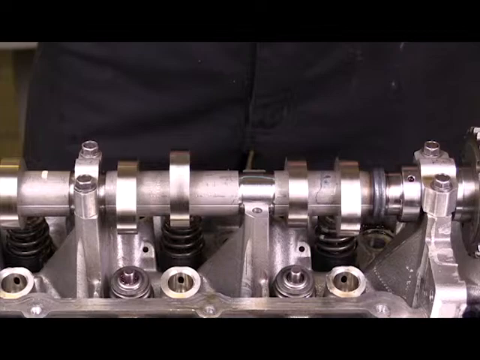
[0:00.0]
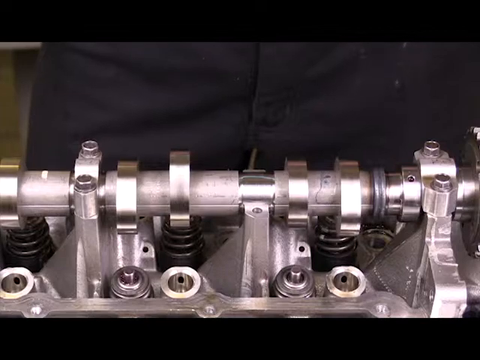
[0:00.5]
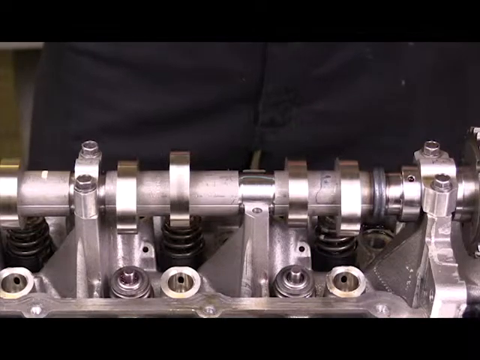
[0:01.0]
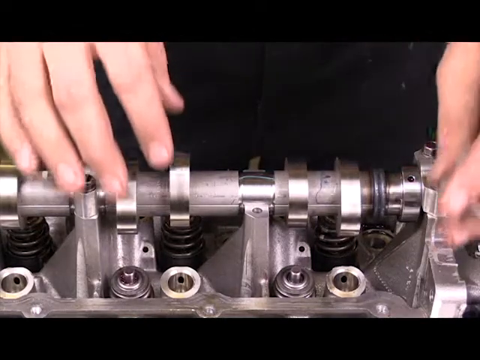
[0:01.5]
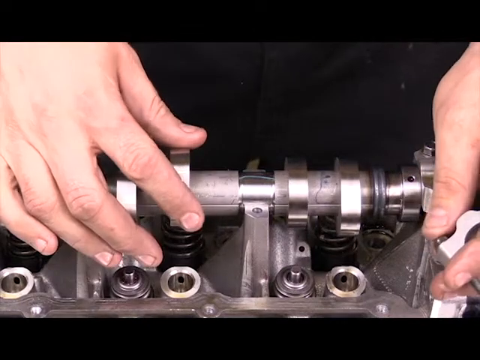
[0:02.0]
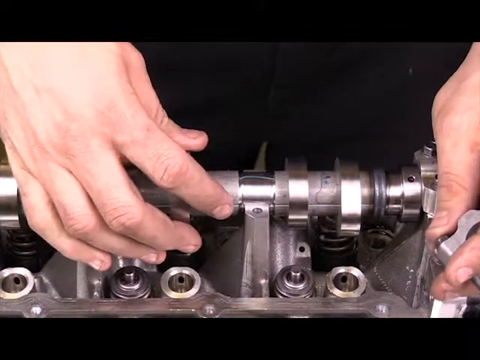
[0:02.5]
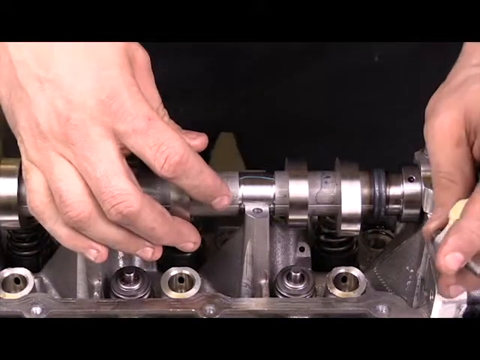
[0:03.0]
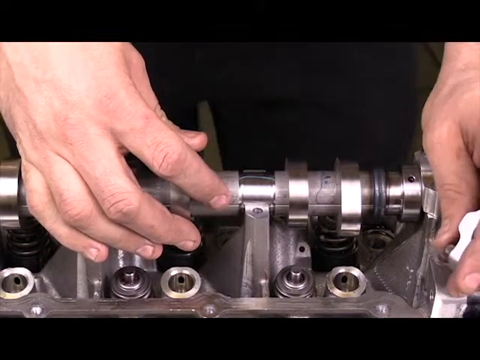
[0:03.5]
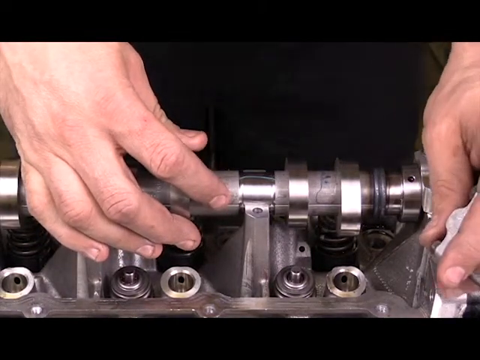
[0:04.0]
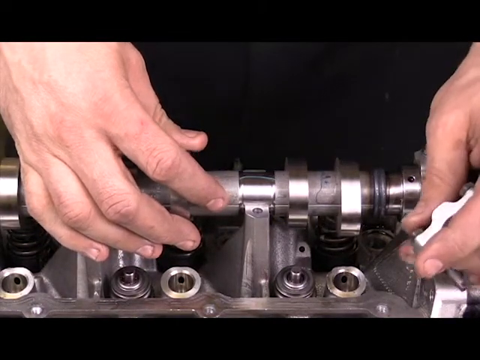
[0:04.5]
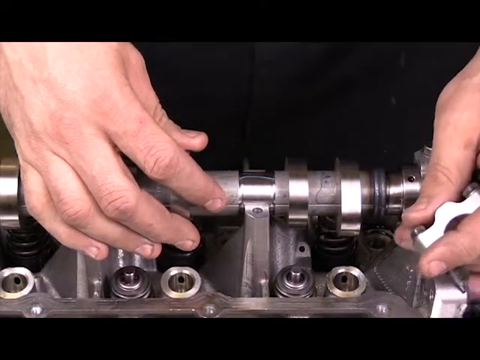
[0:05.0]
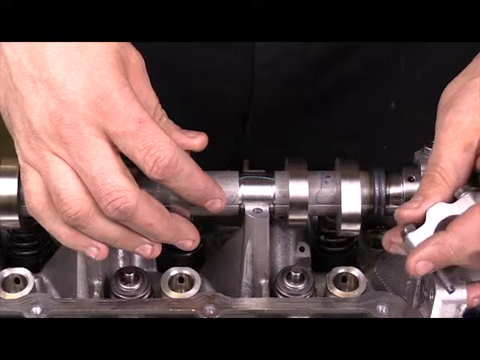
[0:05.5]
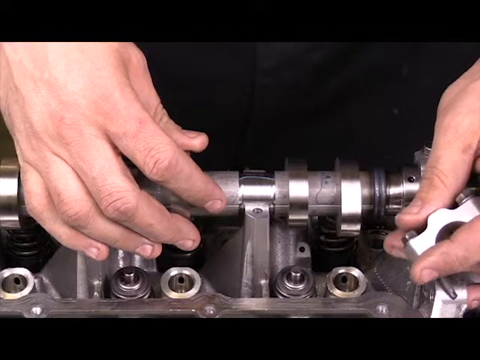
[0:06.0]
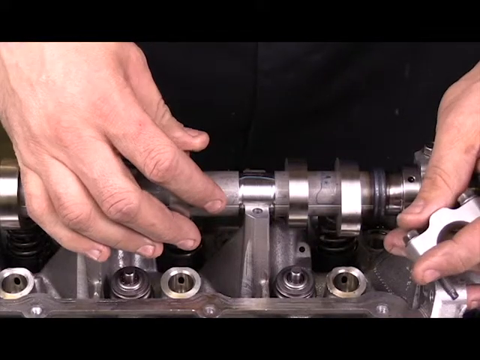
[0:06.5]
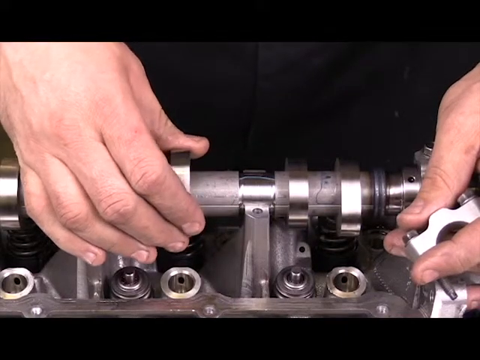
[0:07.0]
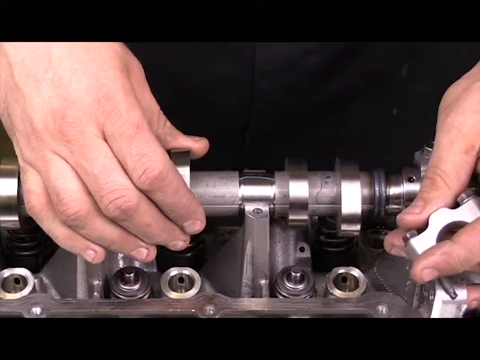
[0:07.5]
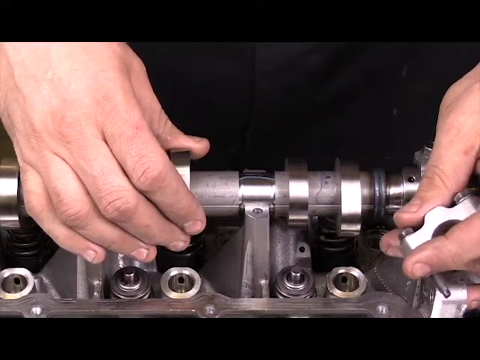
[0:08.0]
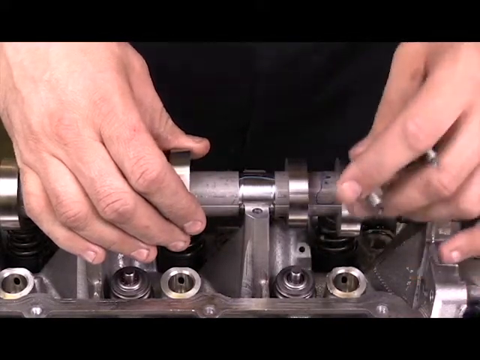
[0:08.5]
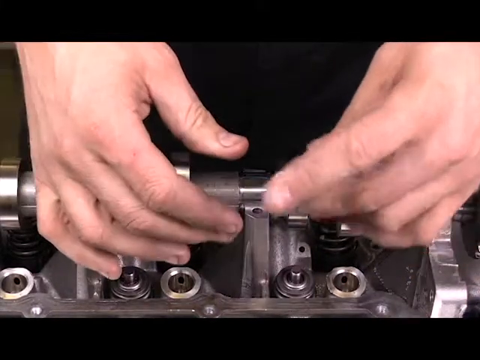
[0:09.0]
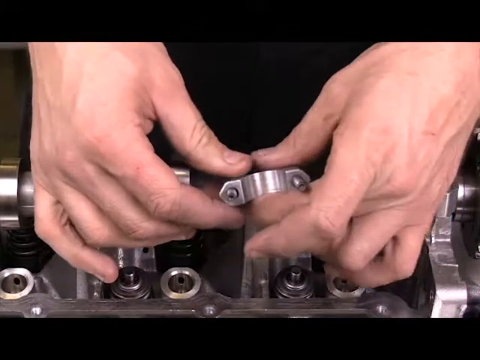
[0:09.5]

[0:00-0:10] A silver object that looks mechanical is shown, with what look like black springs on it. A pair of white male hands comes down into the frame and starts touching the object. The left hand holds a piece of metal between the thumb and forefinger and starts to kind of move it, revealing that it is a little loose piece of something. He then passes the piece from his left hand over to his other hand, and both hands grasp it.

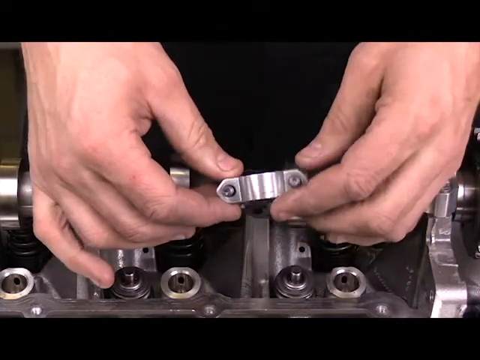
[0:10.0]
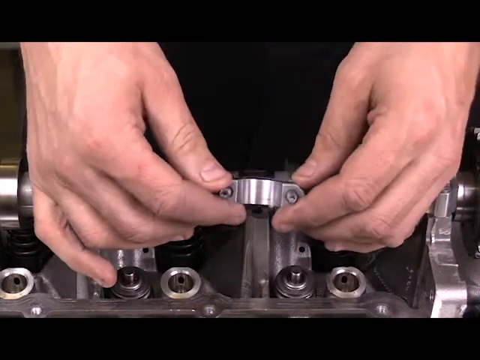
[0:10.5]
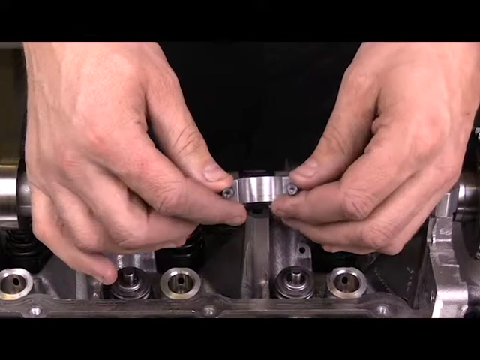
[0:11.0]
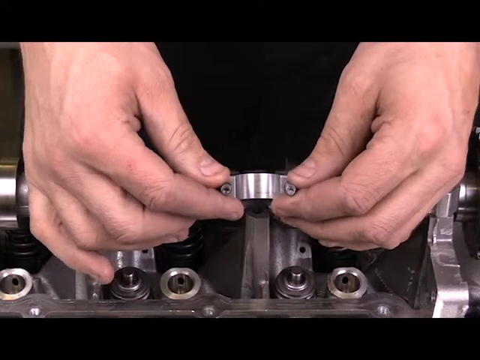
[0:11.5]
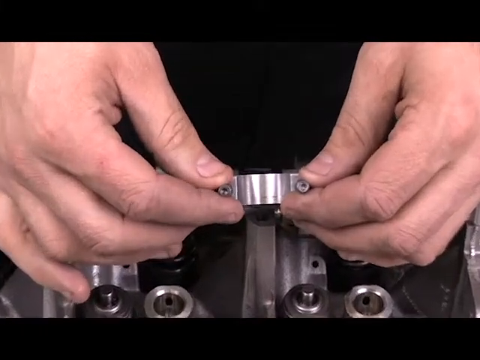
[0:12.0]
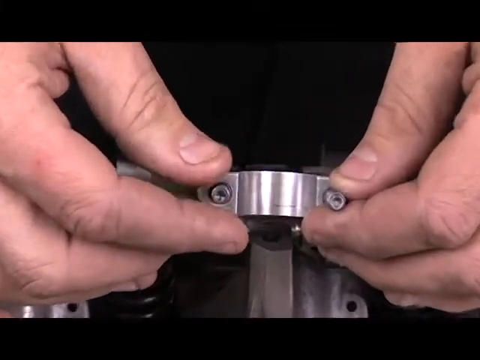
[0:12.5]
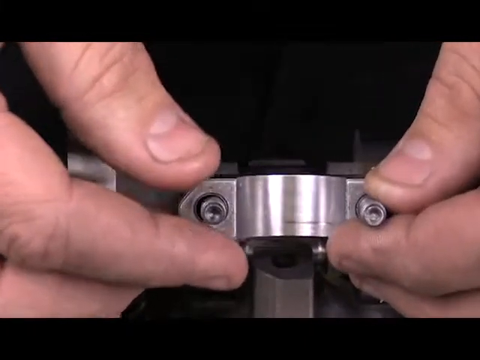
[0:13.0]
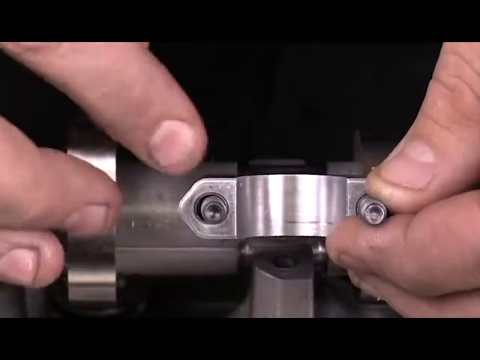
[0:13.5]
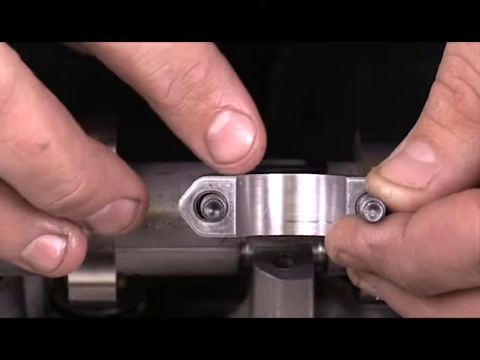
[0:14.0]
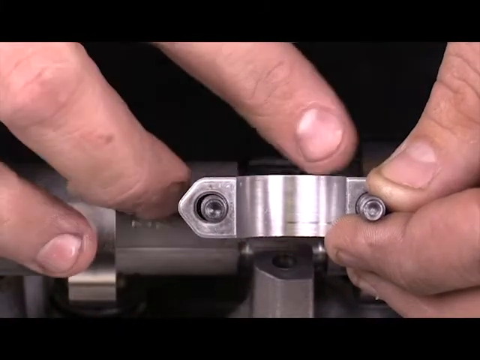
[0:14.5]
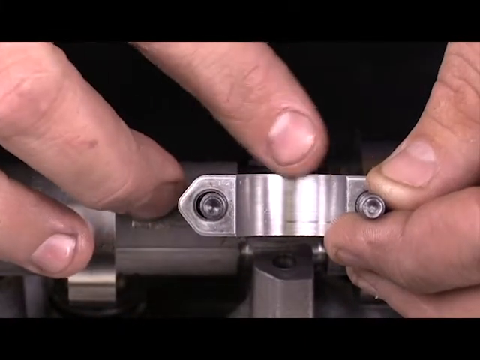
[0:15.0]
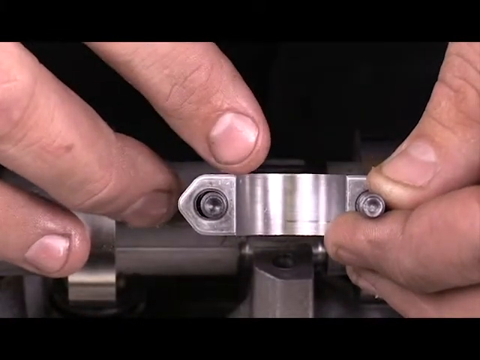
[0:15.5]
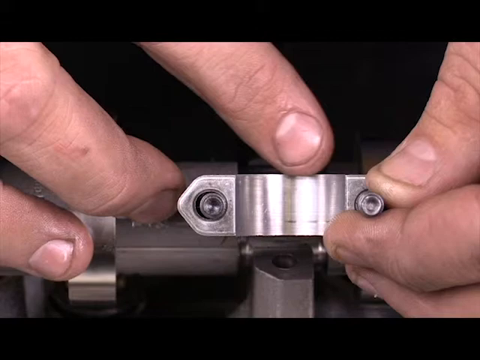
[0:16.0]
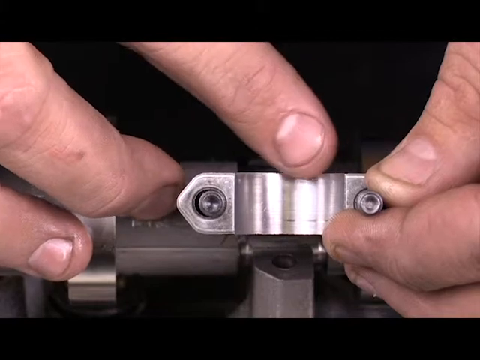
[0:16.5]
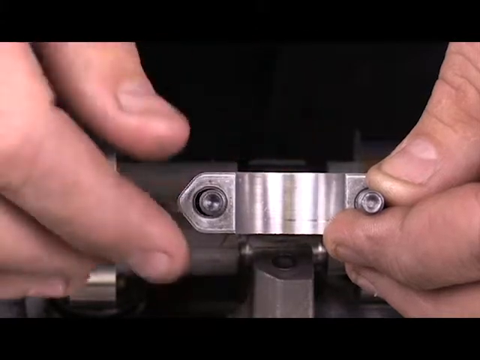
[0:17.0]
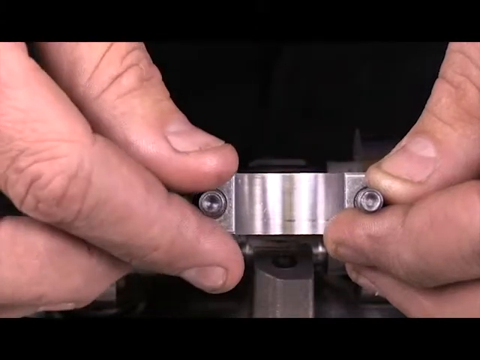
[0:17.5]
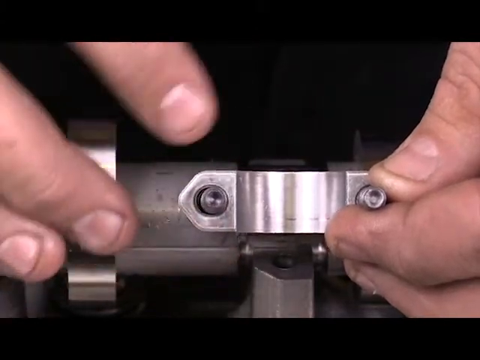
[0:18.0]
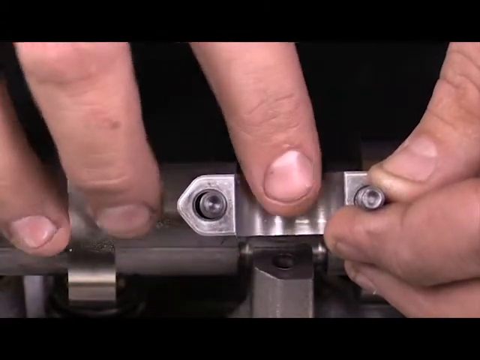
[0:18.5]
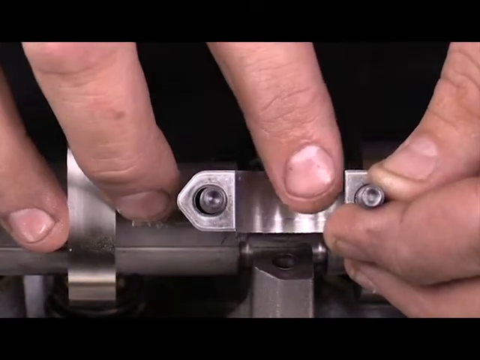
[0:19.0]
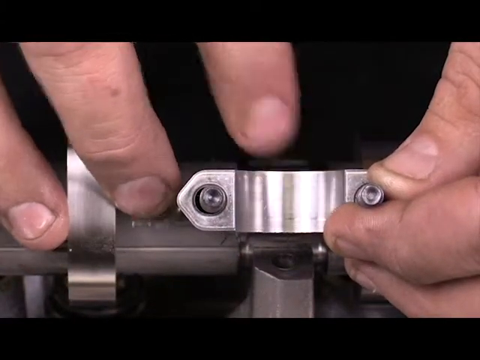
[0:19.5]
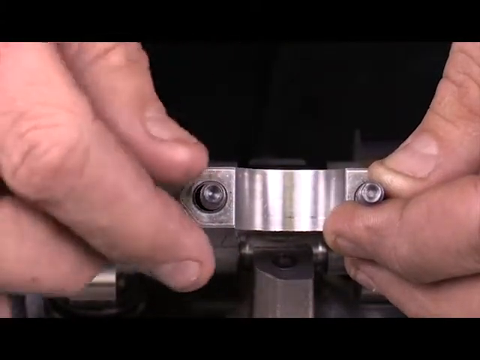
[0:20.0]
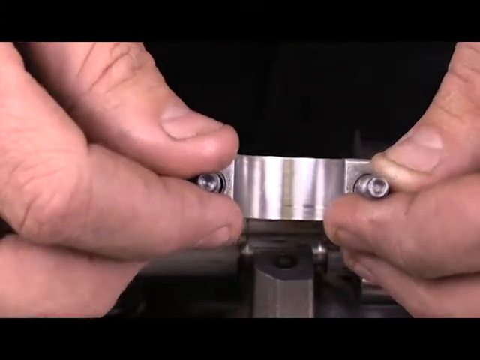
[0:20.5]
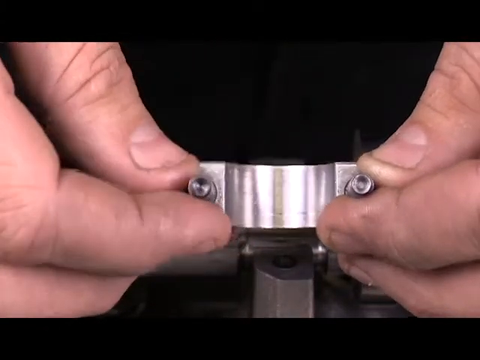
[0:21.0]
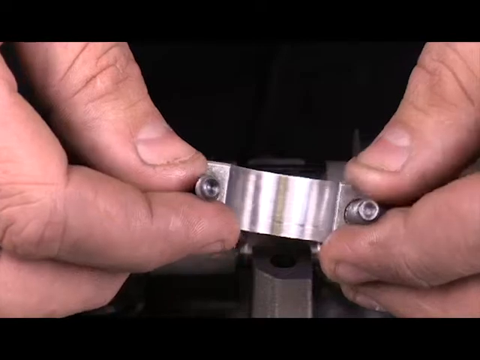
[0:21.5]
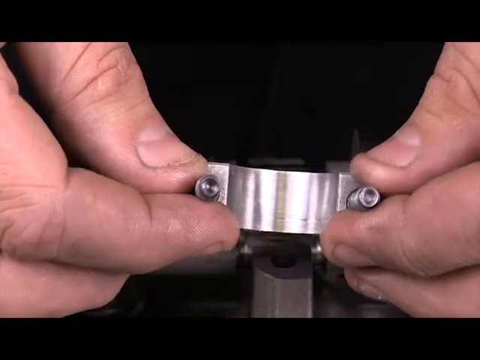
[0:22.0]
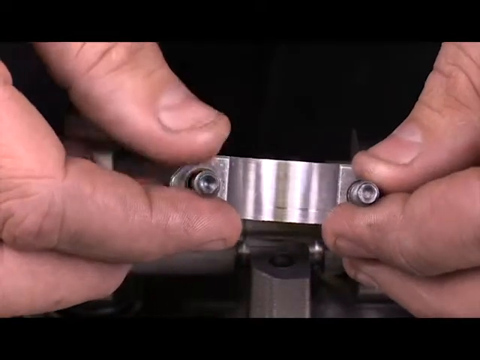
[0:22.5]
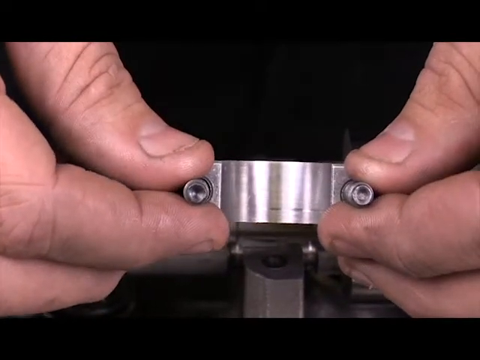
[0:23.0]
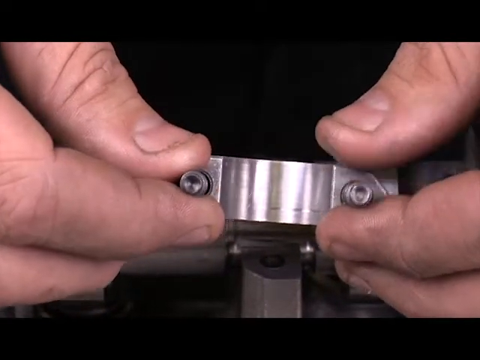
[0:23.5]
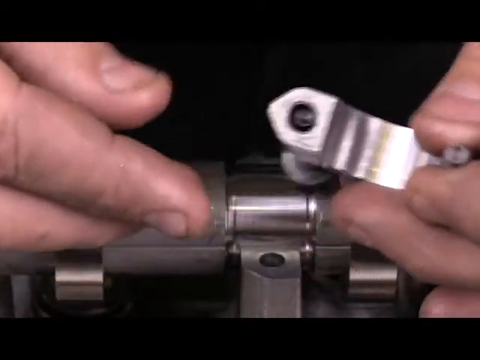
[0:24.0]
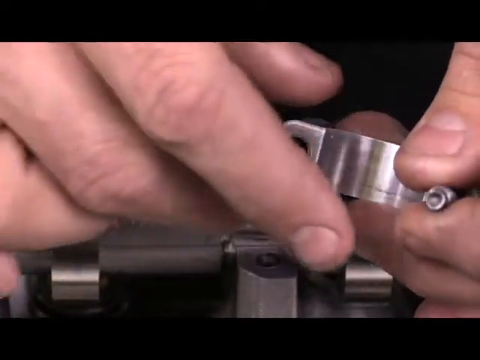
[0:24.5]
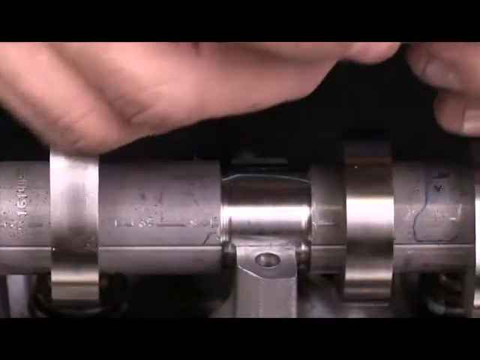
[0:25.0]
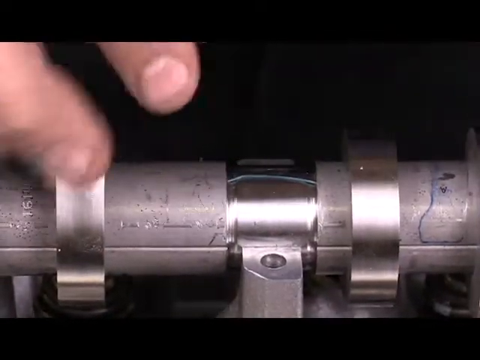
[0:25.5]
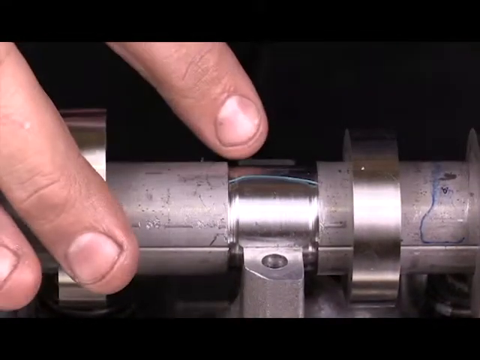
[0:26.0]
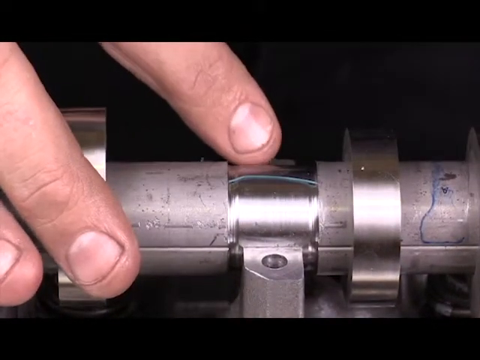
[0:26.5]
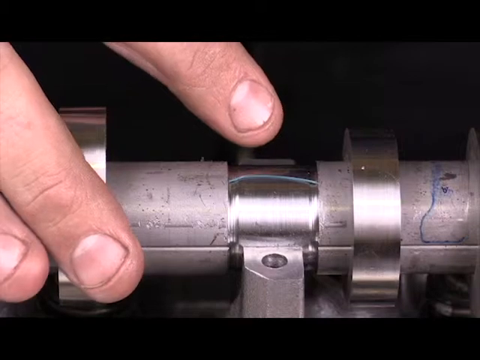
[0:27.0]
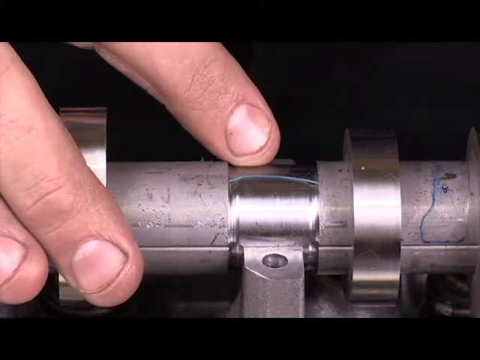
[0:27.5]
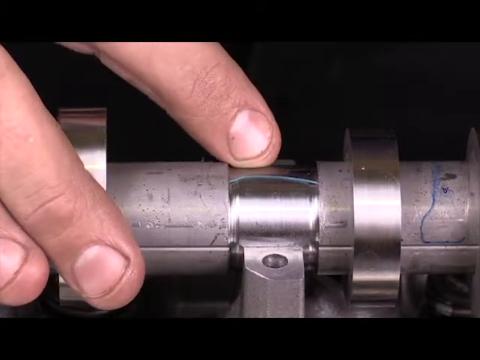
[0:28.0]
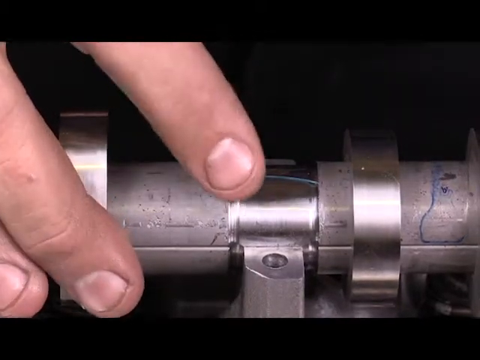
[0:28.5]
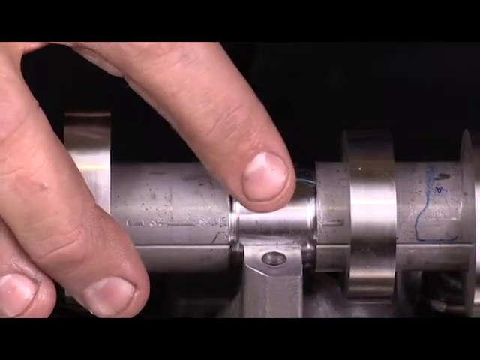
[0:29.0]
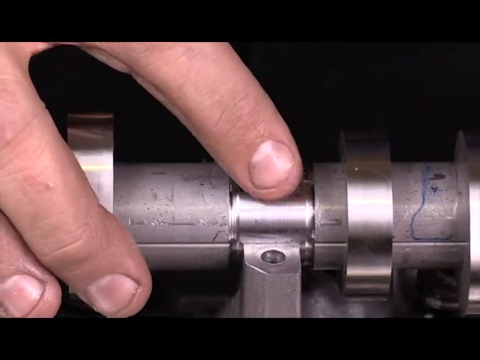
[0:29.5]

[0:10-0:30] A pair of white male hands grasps a little silver piece of metal that has two screws in it. Using thumb and forefinger on both hands, they place this metal piece into a larger metal object. The right index finger then slides horizontally across the piece of metal, perhaps as though describing something. The hands go back to grasping the metal ends with both hands, then lift the piece of metal off and remove it from the screen altogether. The right pointer finger then starts pointing at a smooth piece of metal on the object. The room is likely indoors; the shiny metal catches a reflection that looks like maybe some type of overhead fluorescent light.